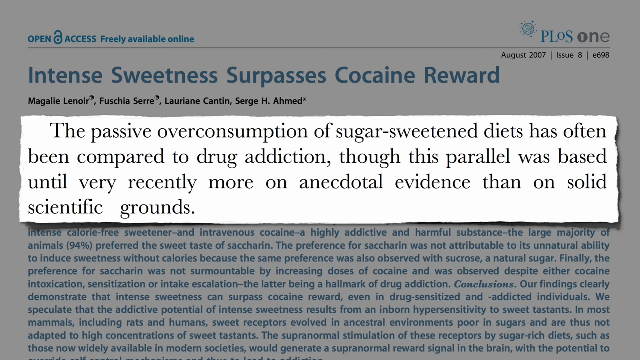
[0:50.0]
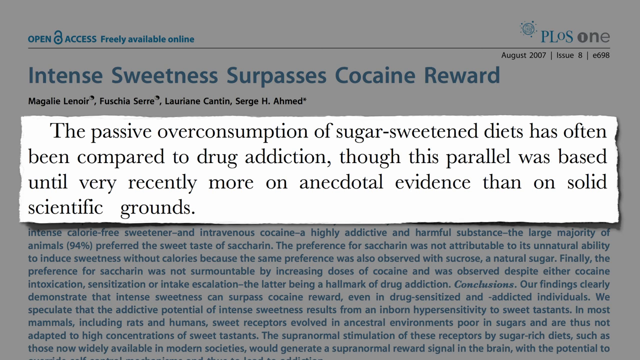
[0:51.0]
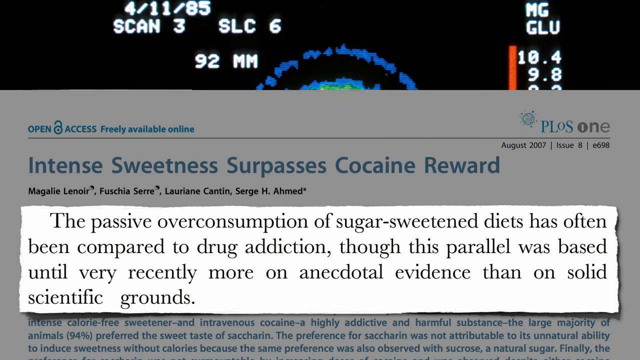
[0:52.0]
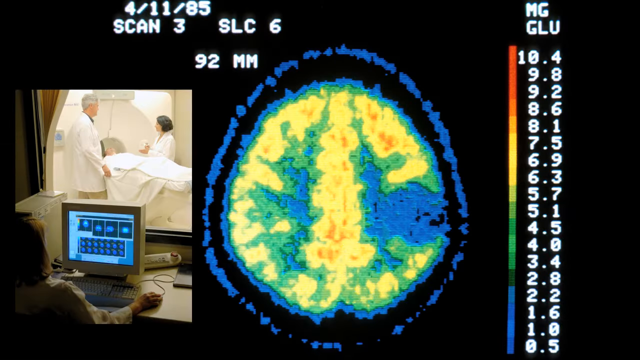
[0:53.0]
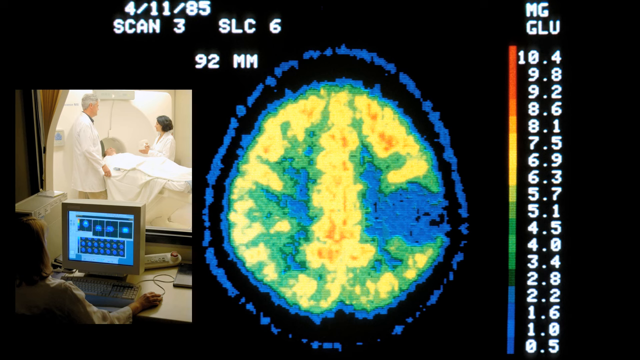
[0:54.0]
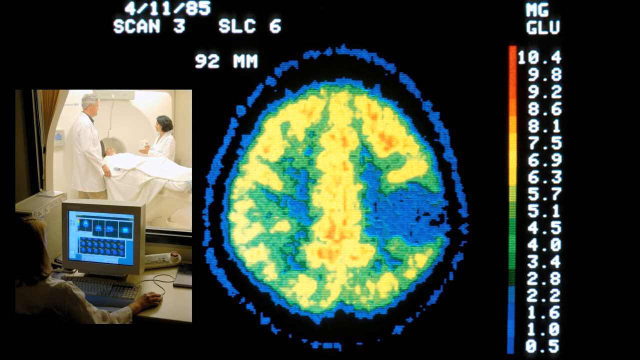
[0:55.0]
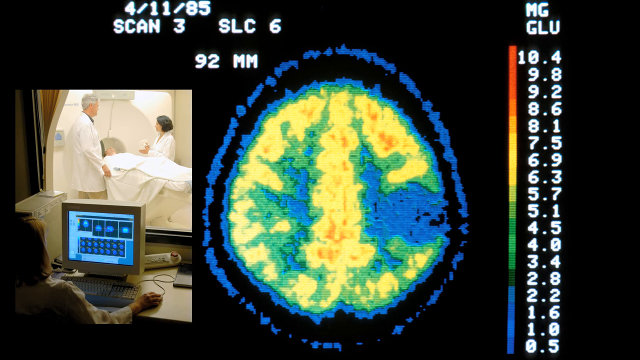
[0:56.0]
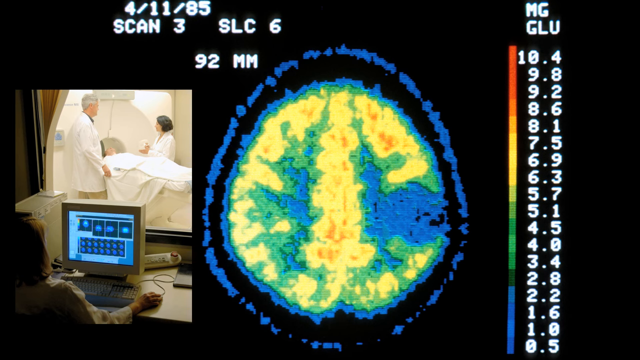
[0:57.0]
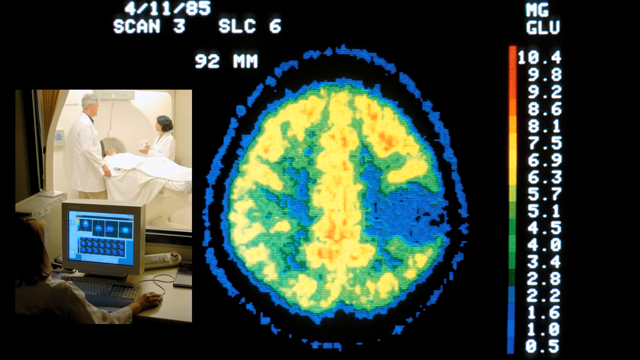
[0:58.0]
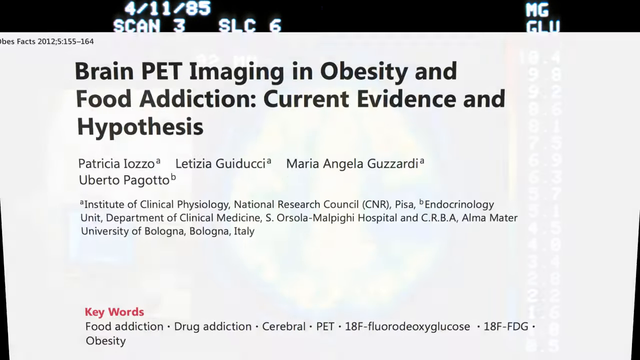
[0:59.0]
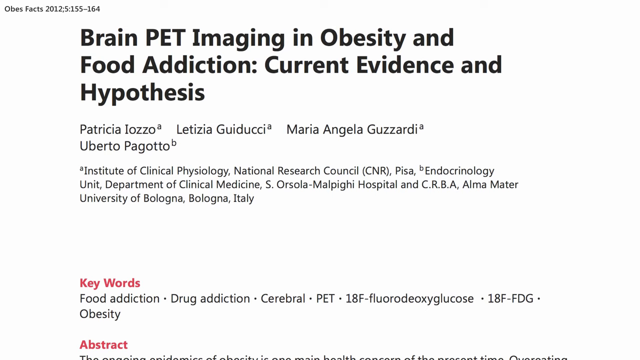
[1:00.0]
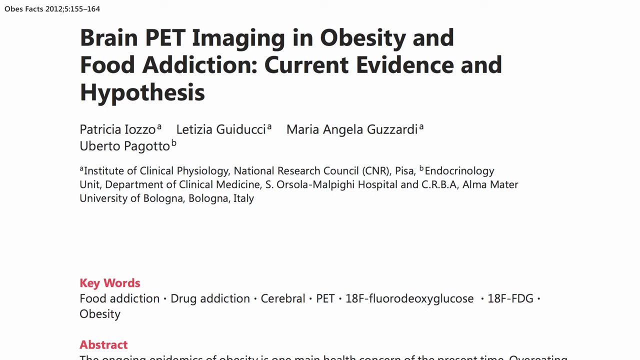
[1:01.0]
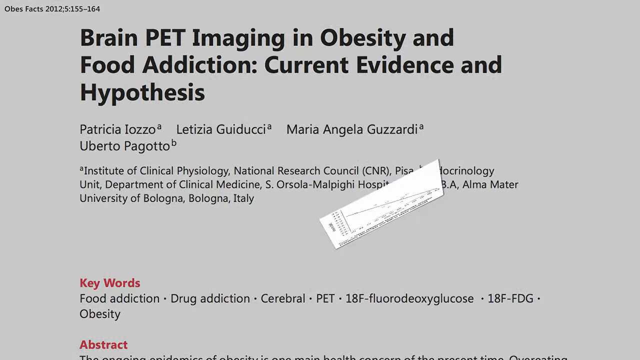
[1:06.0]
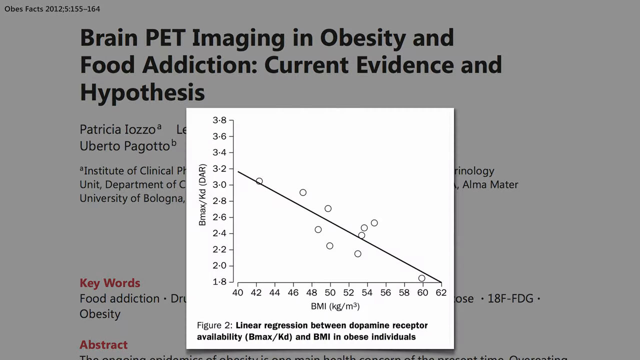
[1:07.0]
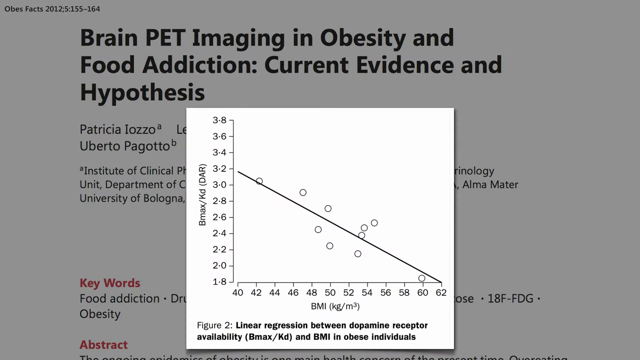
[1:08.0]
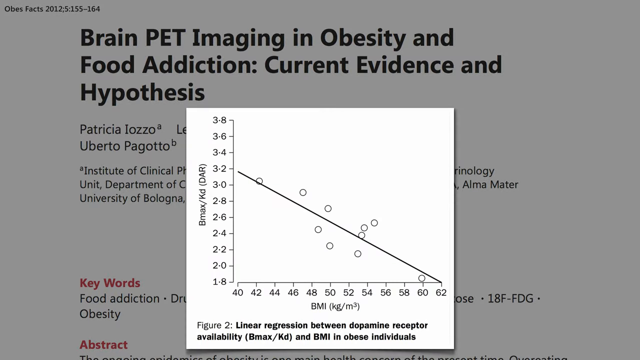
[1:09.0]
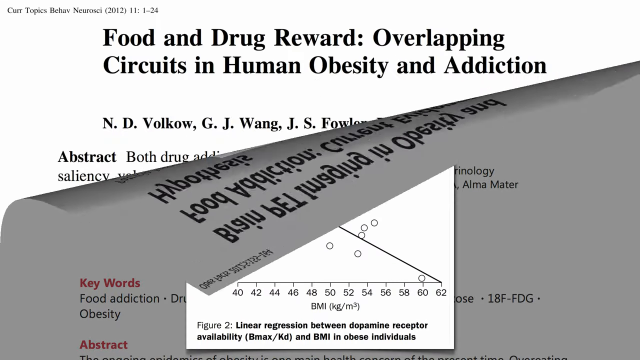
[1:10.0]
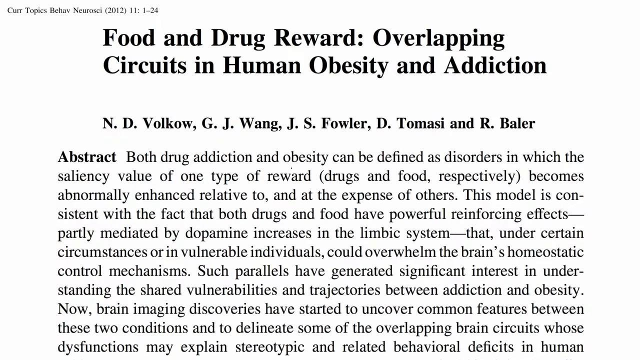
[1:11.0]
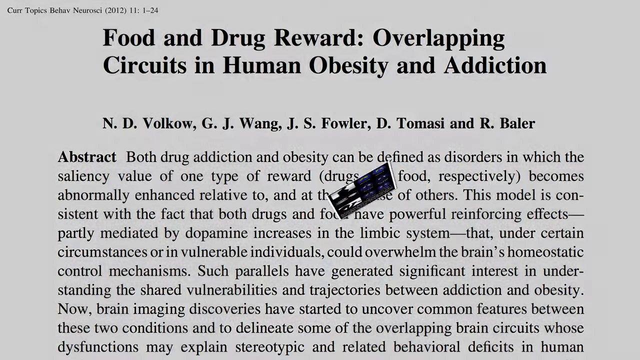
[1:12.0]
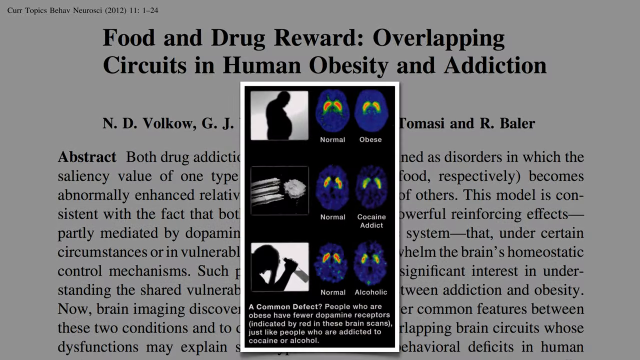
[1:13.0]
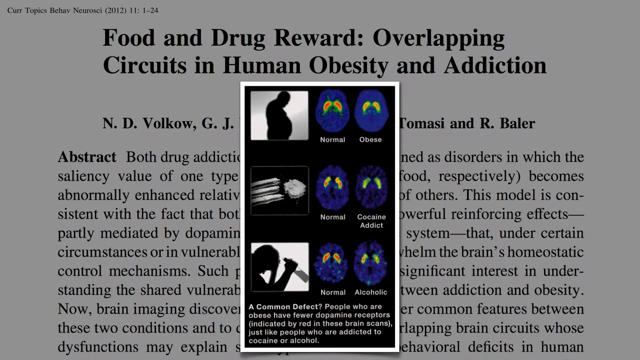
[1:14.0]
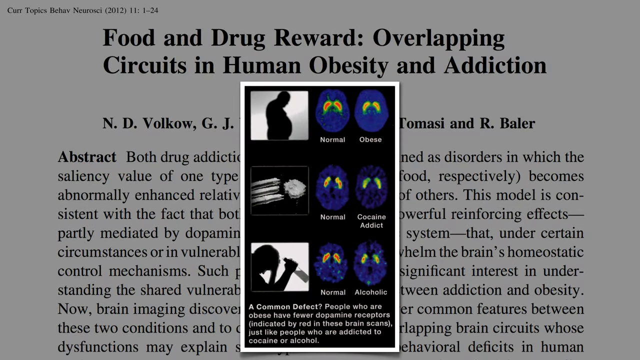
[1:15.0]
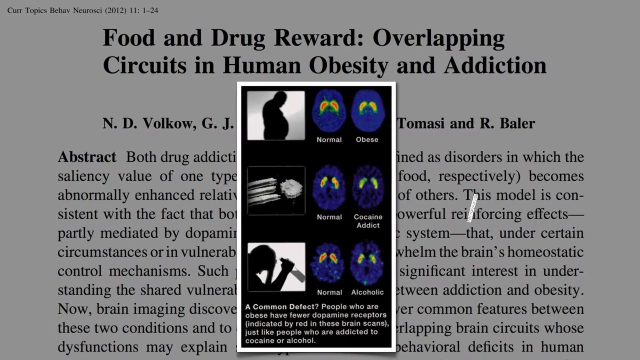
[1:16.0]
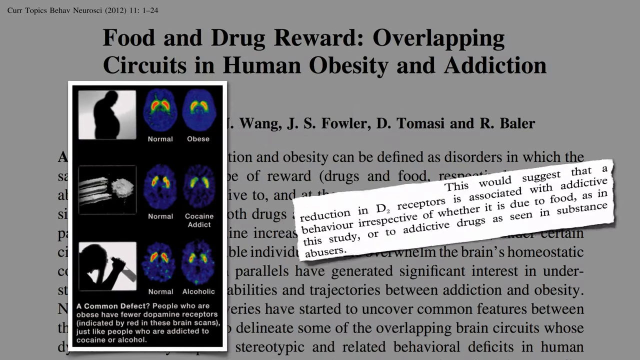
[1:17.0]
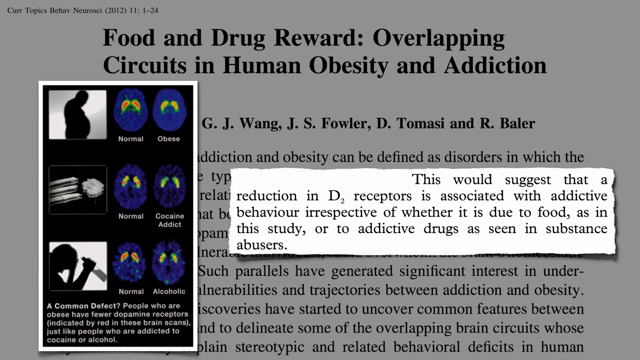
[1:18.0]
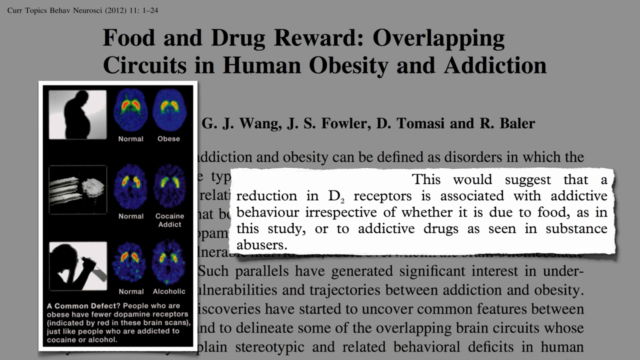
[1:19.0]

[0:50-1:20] The frame is a little wider than it is tall. The article titled "Intense Sweetness Surpasses Cocaine Reward" is in the background, dimmed, while in the foreground a paragraph from it is blown up and centered on a white background. In black text it says: "the passive overconsumption of sugar-sweetened diets has often been compared to drug addiction. Though this parallel was based until very recently more on anecdotal evidence than on solid scientific grounds." This fades out by moving down the page. Underneath, in the left third, is what looks like a view from behind a lab tech working on a computer, looking in on a patient going into an MRI machine, with two doctors in lab coats around the person going in. In the center is what looks like a brain scan in various colors: blue on the outside, yellow moving in toward the center, then a green outline with some blue areas. A scale is on the right-hand side.